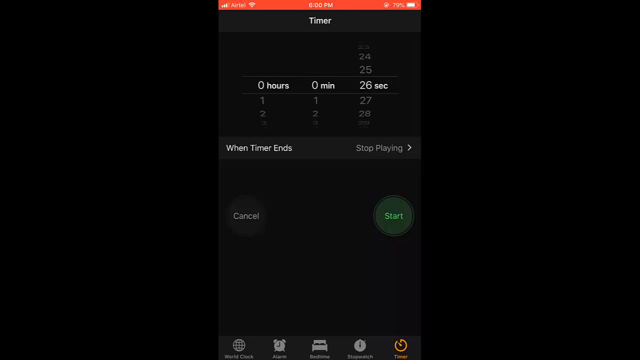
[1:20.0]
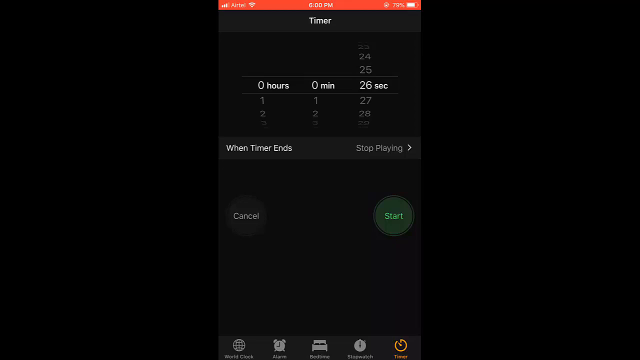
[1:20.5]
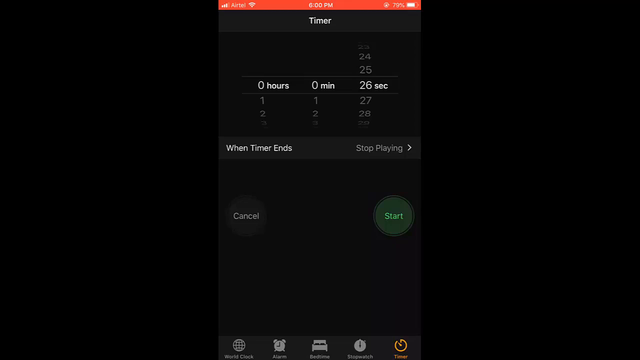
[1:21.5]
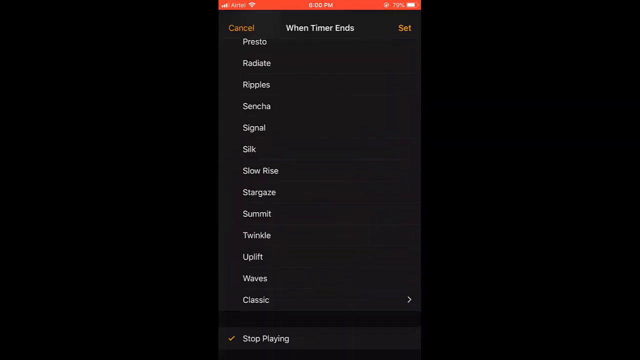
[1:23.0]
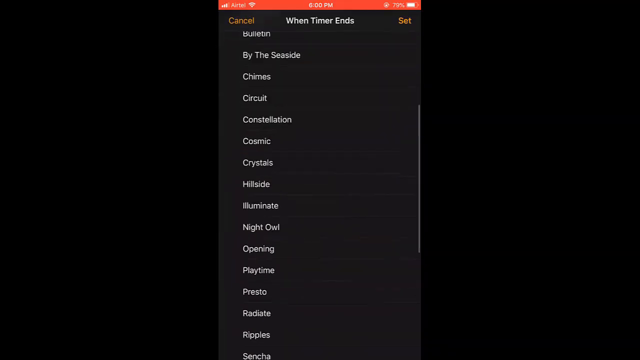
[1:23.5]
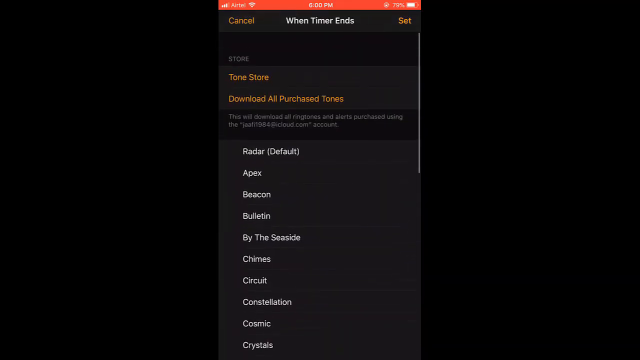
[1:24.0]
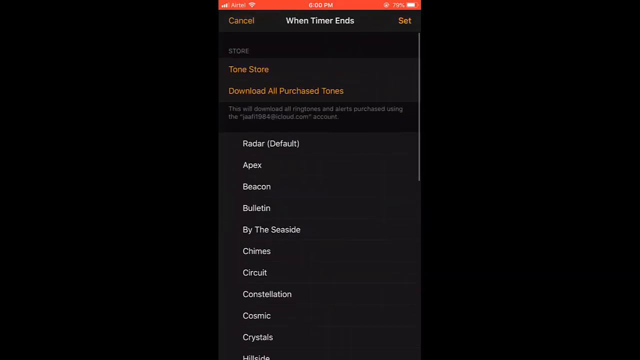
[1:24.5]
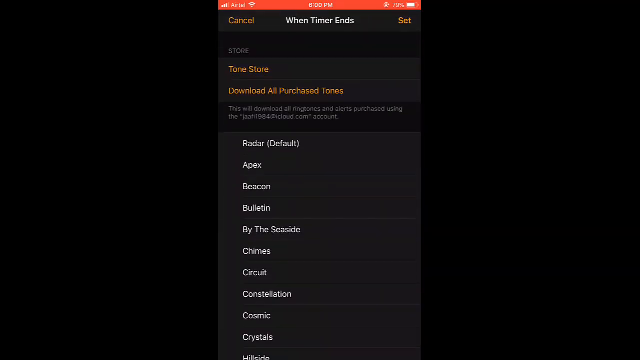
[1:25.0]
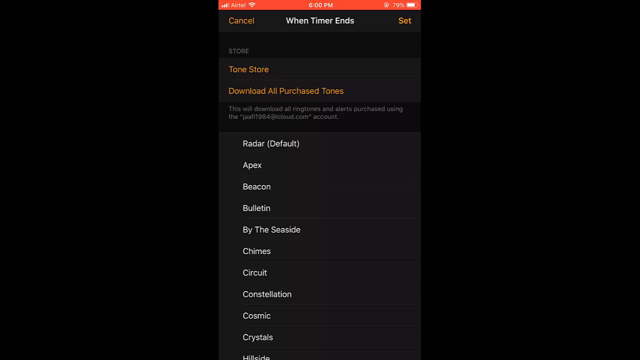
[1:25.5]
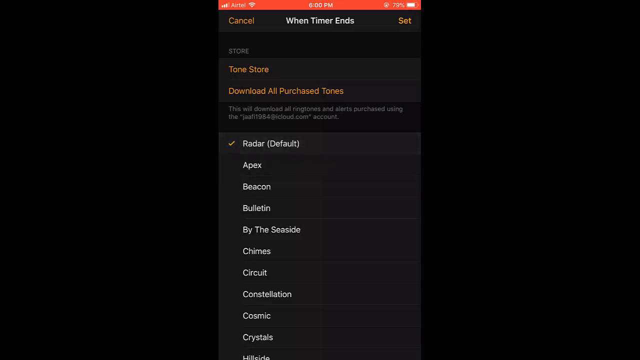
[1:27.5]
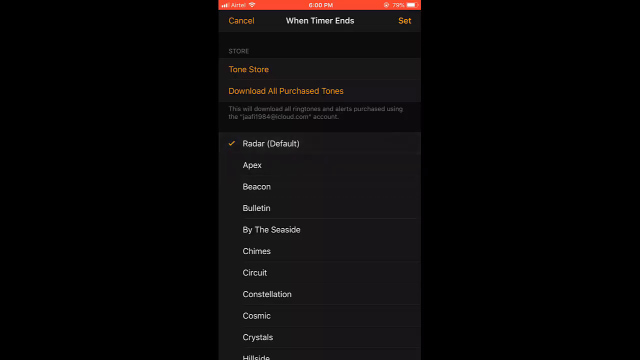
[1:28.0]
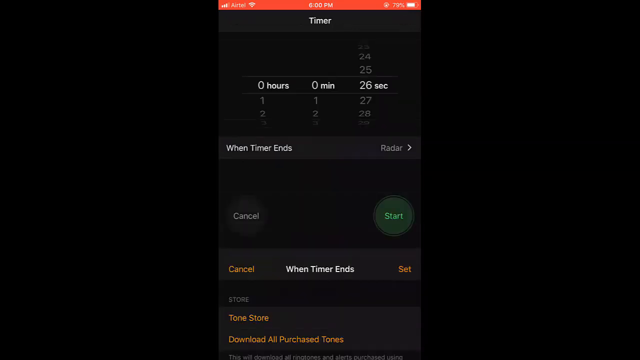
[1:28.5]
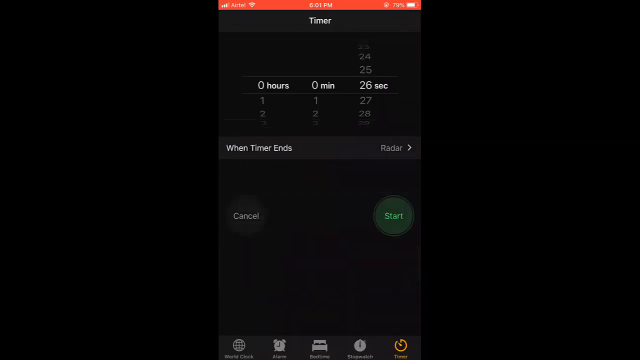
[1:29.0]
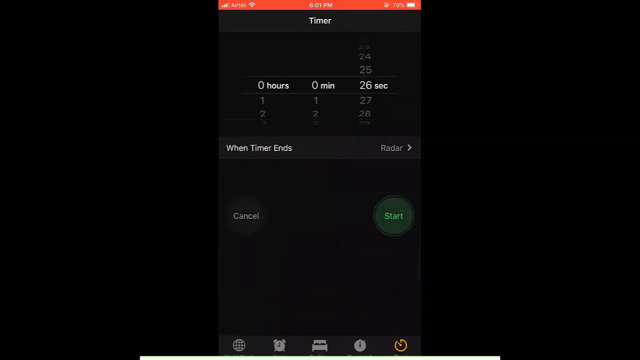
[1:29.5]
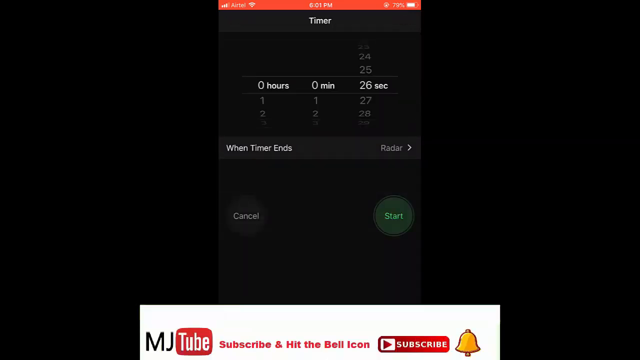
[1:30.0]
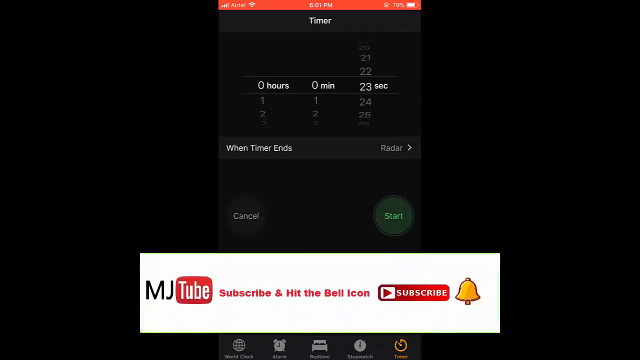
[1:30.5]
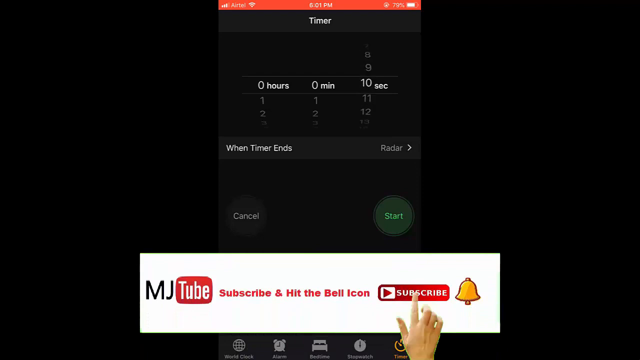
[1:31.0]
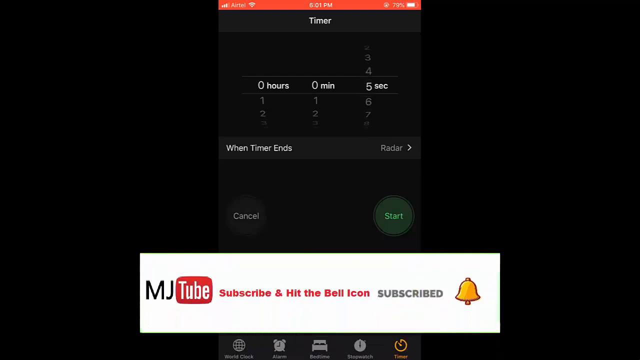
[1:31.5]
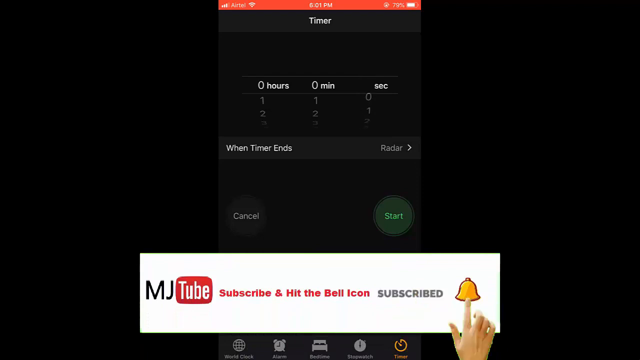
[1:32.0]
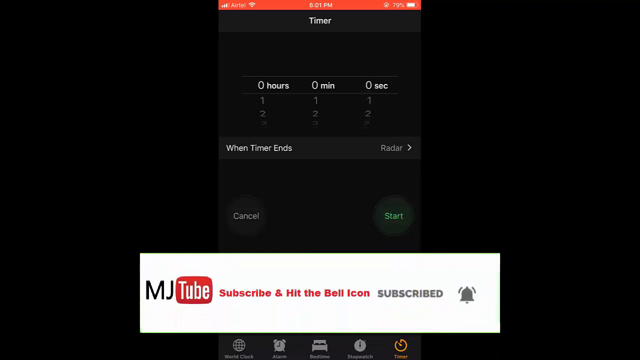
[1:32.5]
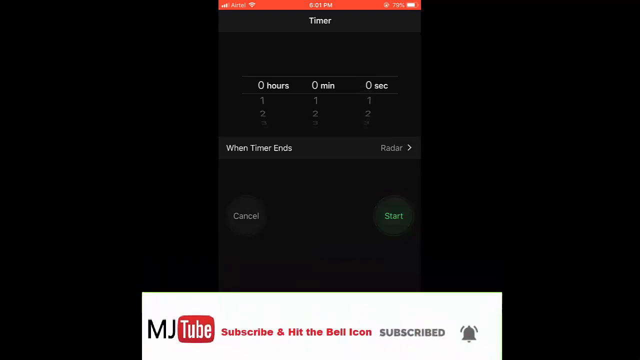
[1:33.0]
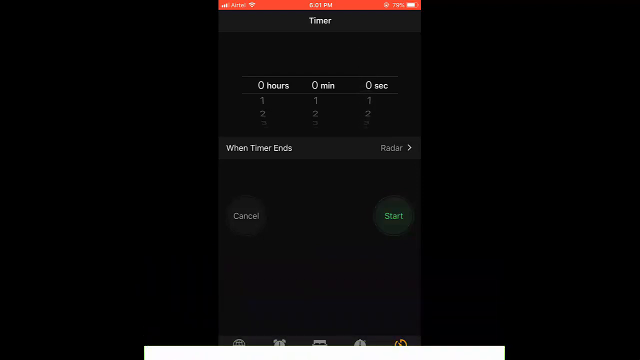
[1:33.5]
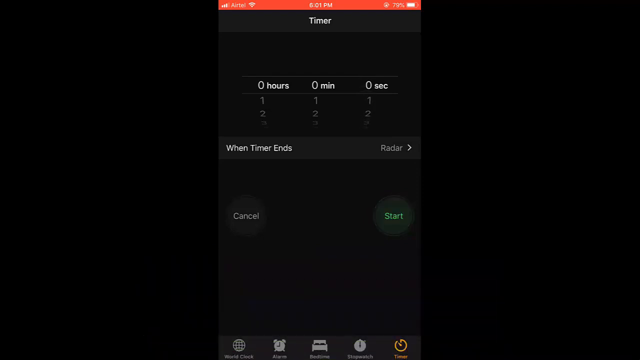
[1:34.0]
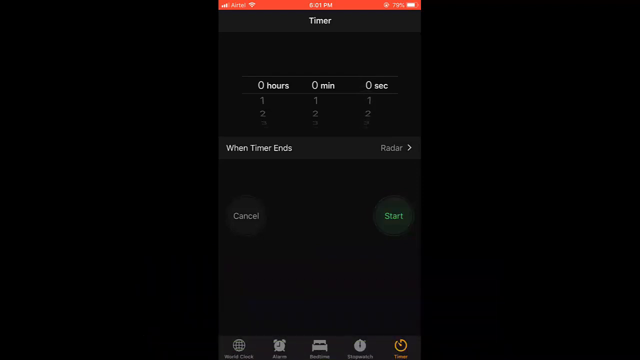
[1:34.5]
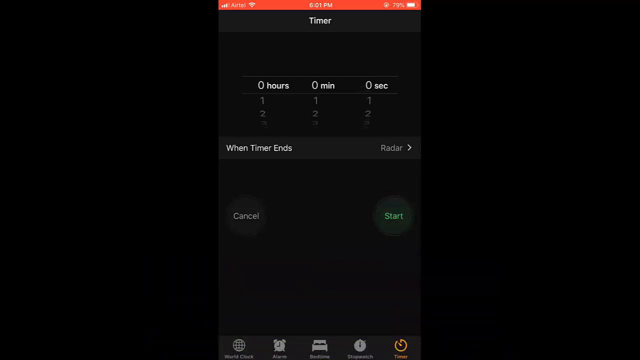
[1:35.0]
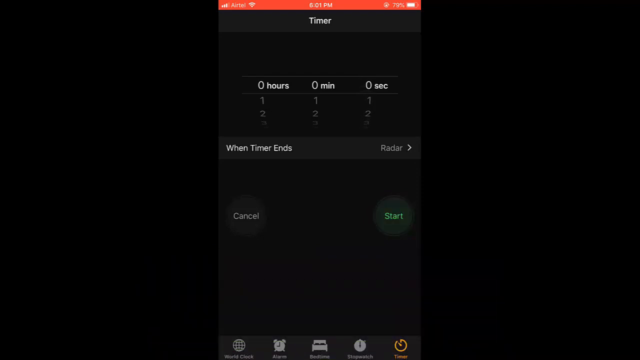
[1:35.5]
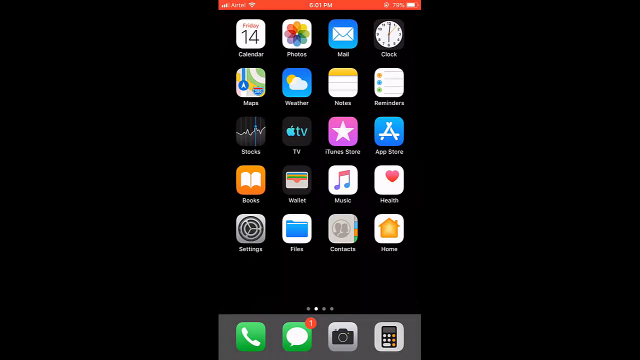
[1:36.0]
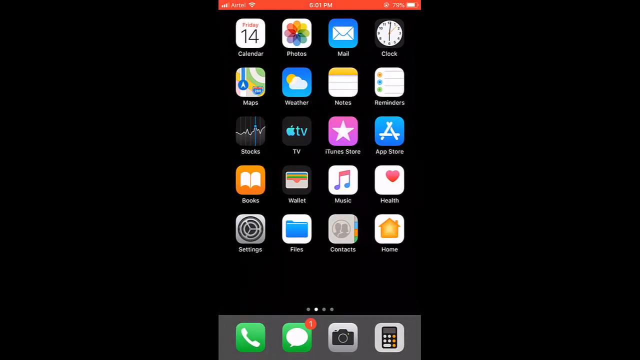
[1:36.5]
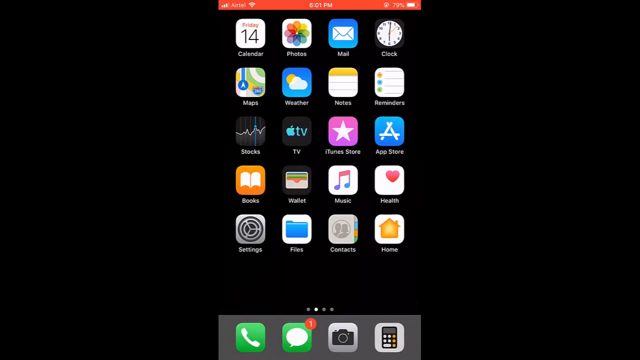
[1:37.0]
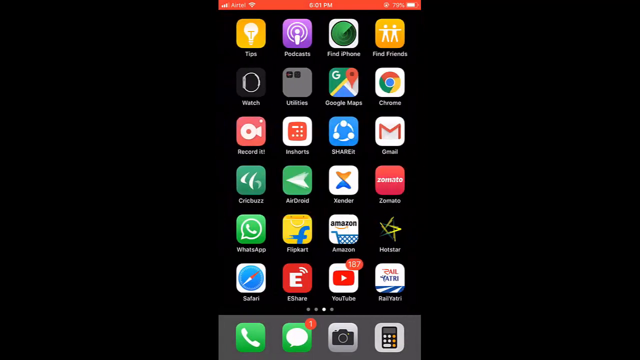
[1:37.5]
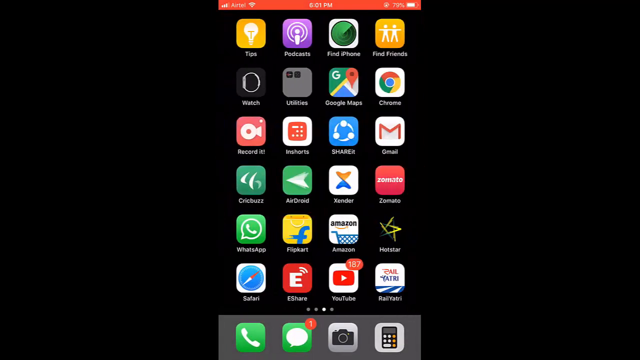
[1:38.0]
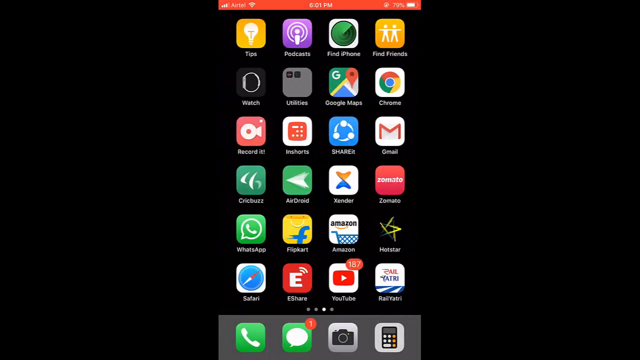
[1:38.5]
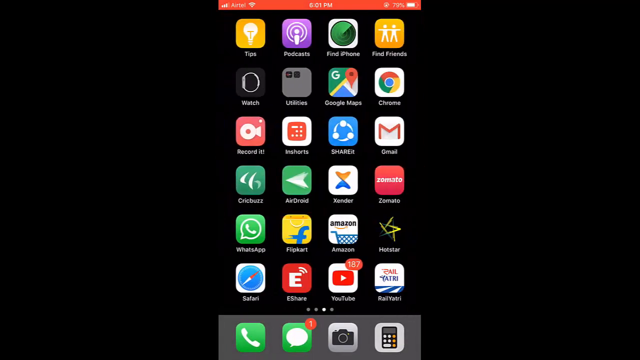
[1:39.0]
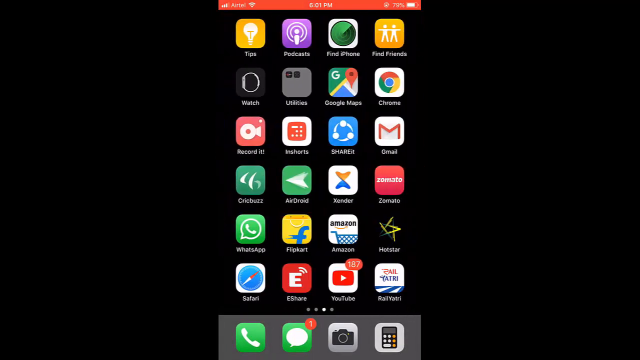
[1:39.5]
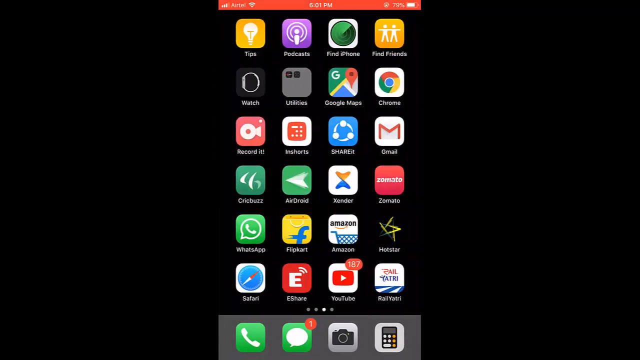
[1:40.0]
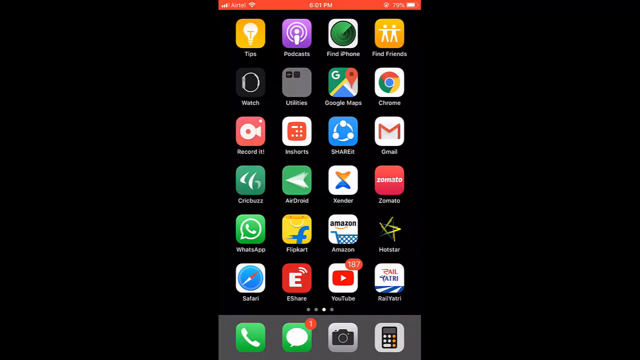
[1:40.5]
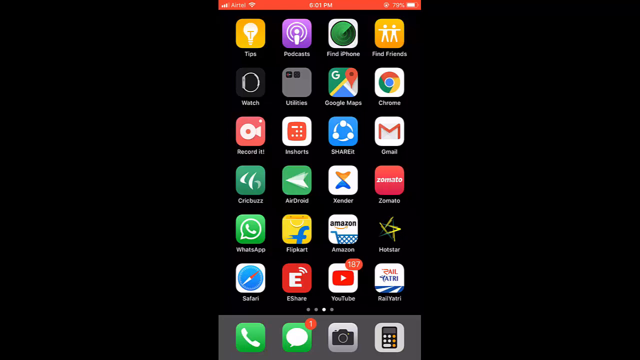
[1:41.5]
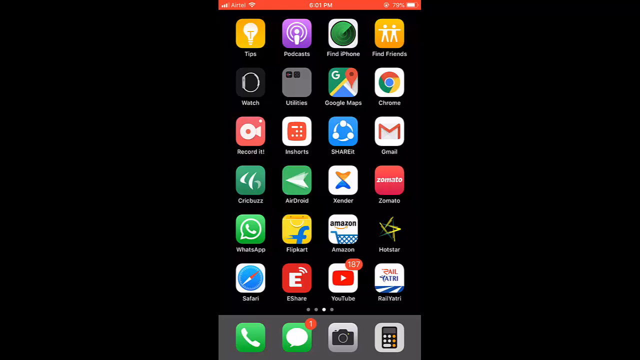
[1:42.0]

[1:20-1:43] The user clicks the text "when timer ends". A new screen pulls up from the bottom, showing various options to select. The user clicks "Radar (Default)", which adds an orange checkmark to its left-hand side. The user closes this option and returns to the timer section. A banner for MJtube appears at the bottom of the screen prompting users to subscribe and hit the bell, with images of a bell and a hand with an outstretched finger clicking the subscribe button. The user re-adjusts the timer, this time setting the hours, minutes and seconds all to zero. The user exits the clock app once again, scrolls to page 3 of the apps, and waits on this page for a few moments before the video ends.